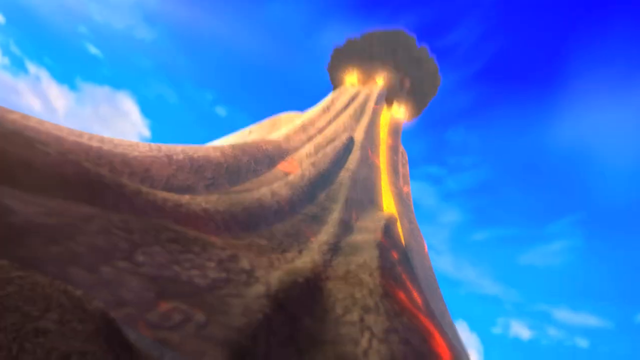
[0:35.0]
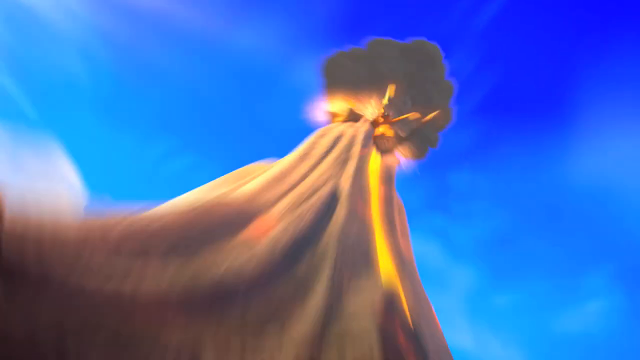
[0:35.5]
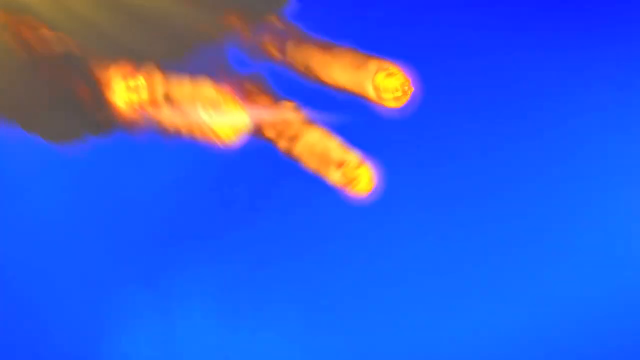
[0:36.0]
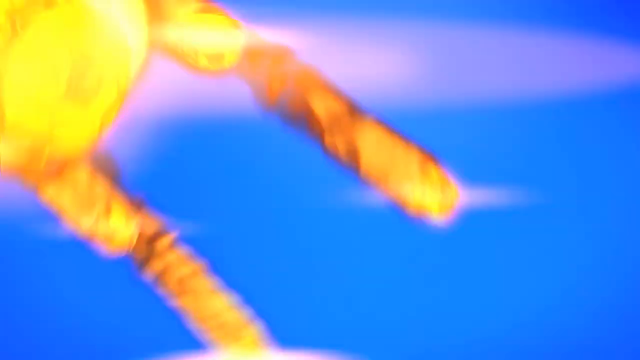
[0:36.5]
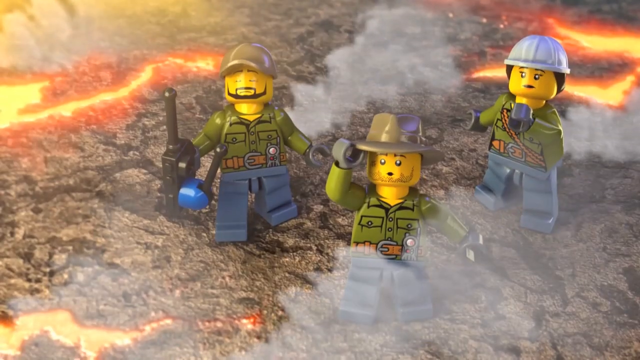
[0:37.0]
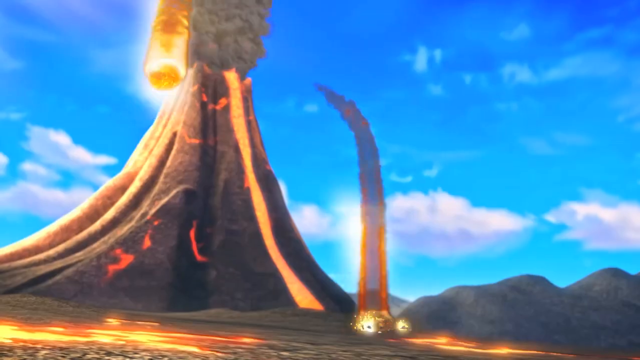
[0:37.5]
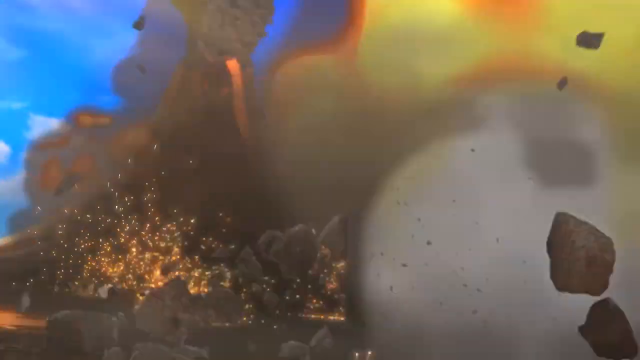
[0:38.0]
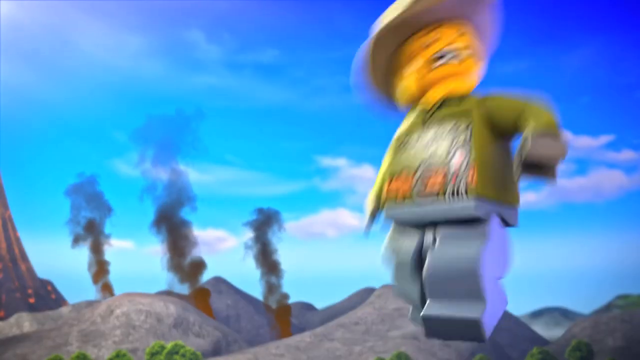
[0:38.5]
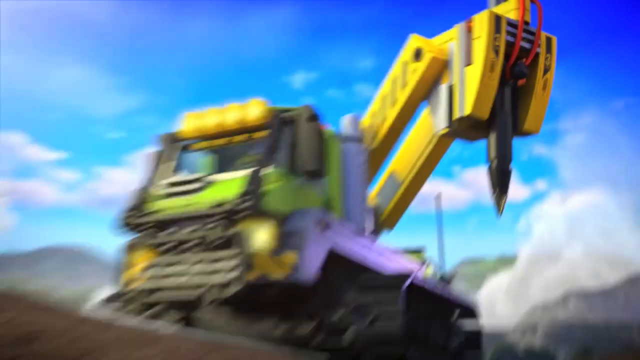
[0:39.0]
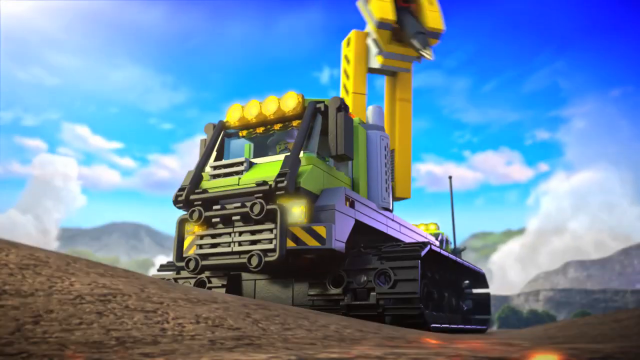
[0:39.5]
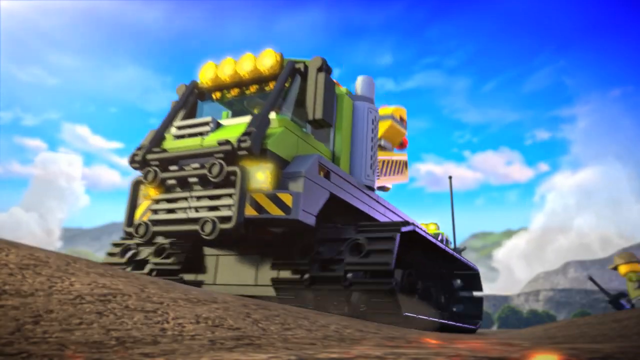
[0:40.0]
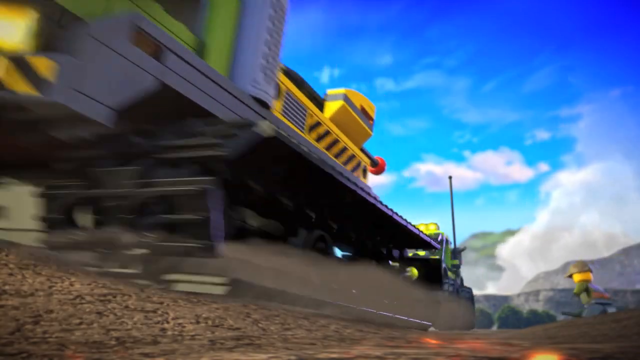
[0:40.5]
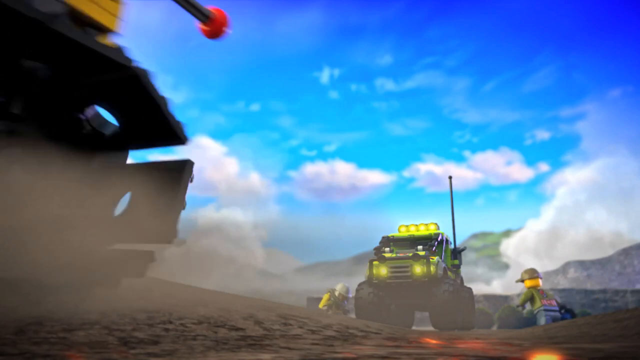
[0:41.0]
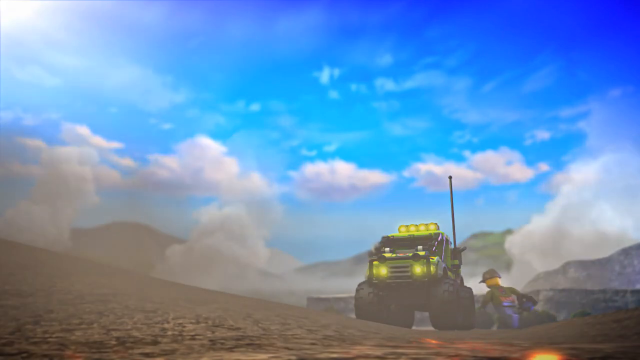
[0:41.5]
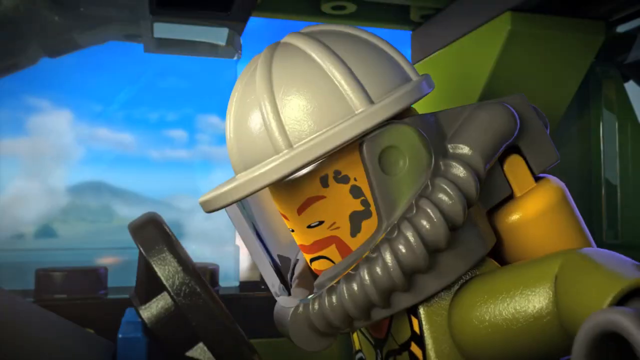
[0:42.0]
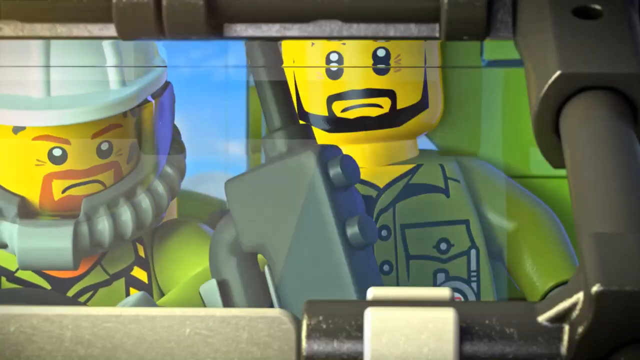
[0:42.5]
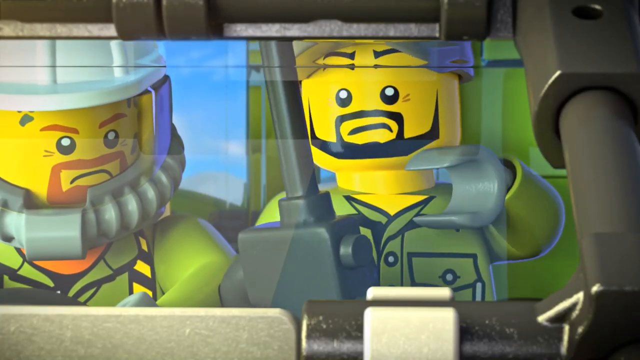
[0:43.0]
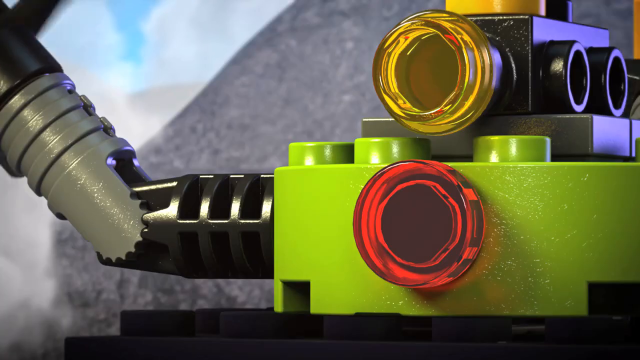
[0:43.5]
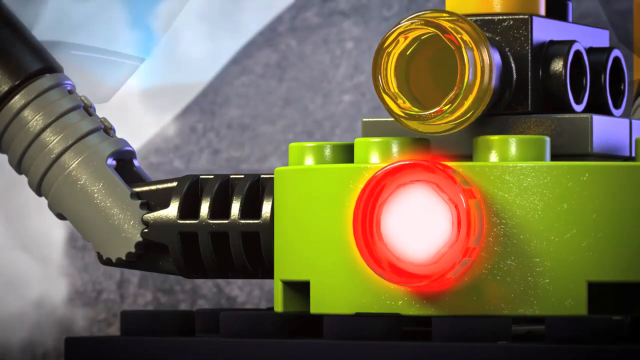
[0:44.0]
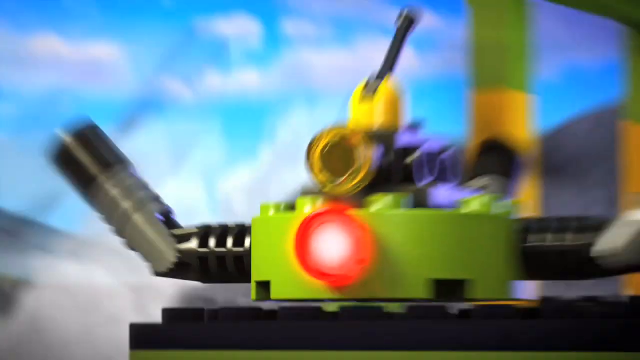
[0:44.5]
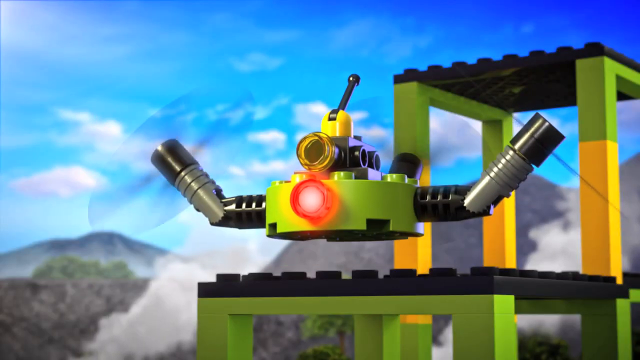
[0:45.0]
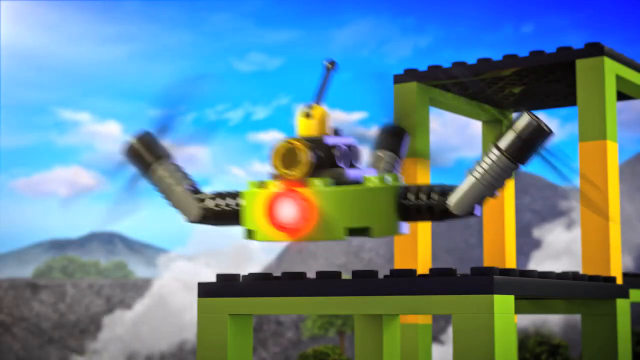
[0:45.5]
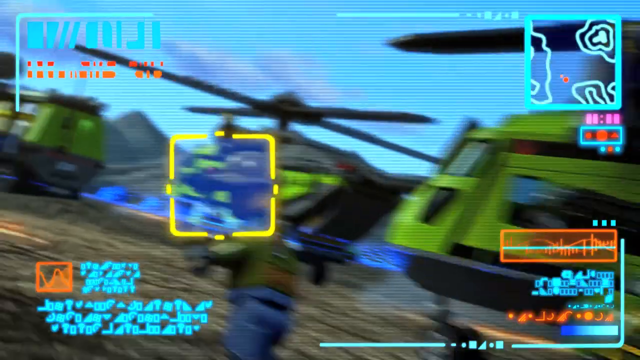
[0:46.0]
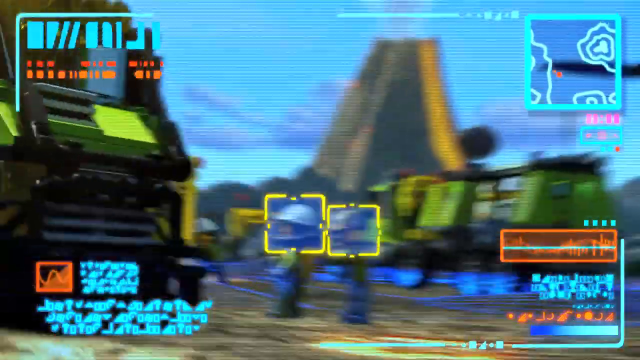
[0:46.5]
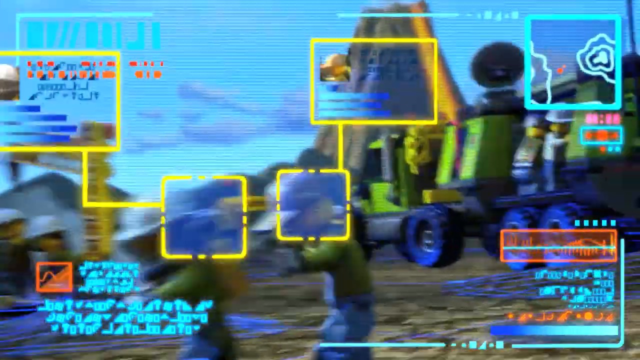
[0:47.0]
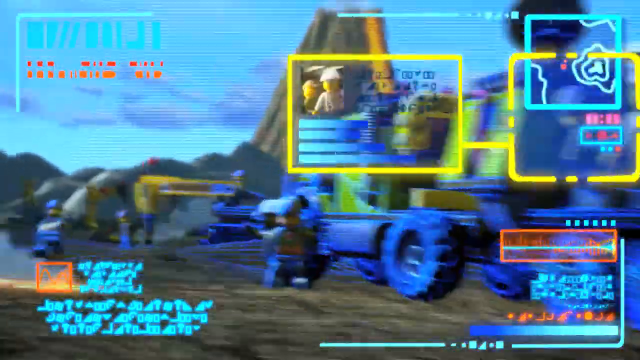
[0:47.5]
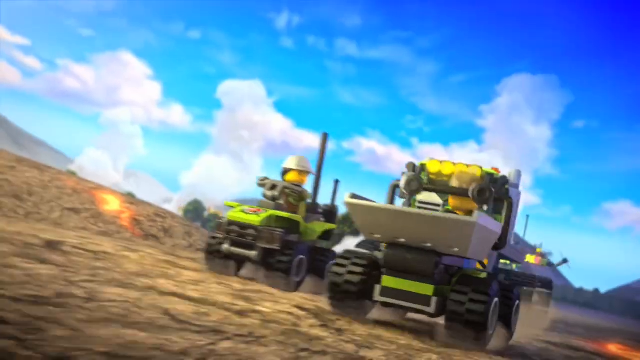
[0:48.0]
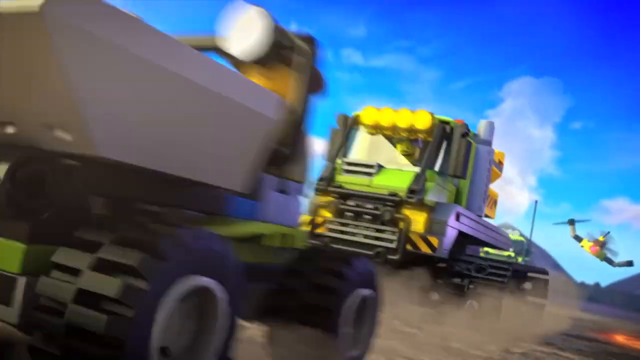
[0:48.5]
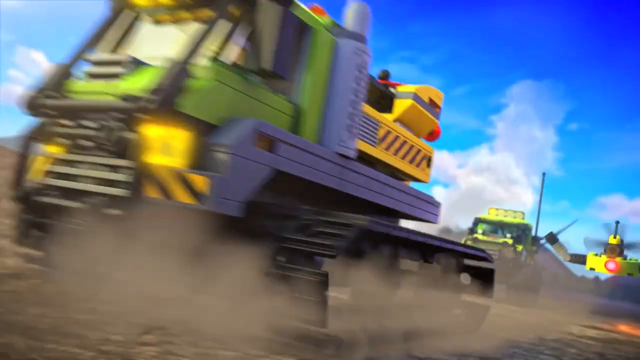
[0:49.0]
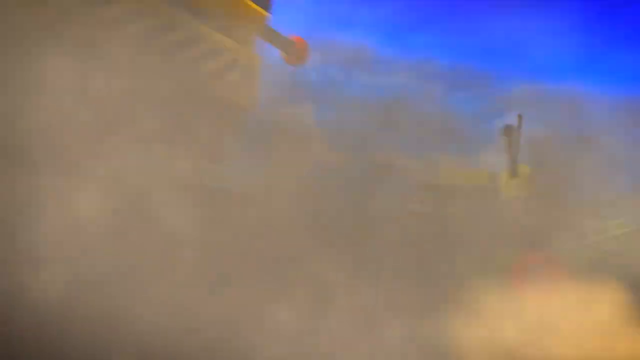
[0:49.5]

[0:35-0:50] A helicopter lands in a field, with a volcano spewing lava behind it. Some people inside one of the machines with scientific equipment are very excited and kind of freaking out as something happens. A little Lego lady places her hands on her face in terror as the volcano erupts in the background. Other large equipment on tracks drives away, and it appears that everyone is evacuating the area. Some sort of little drone takes off and flies through the air as people scatter and run in all directions on the ground.